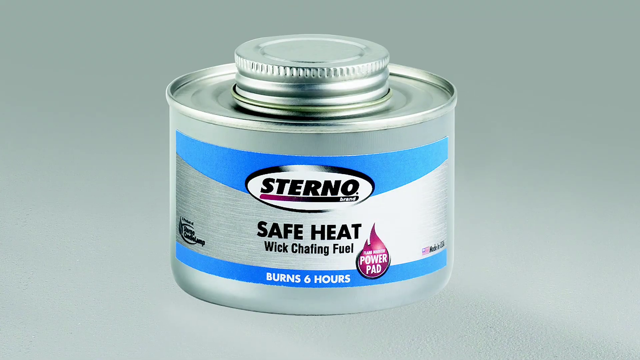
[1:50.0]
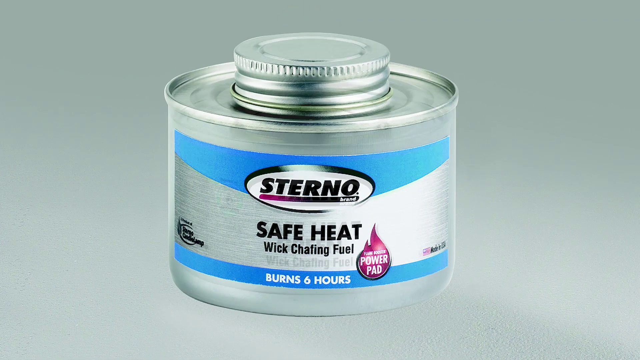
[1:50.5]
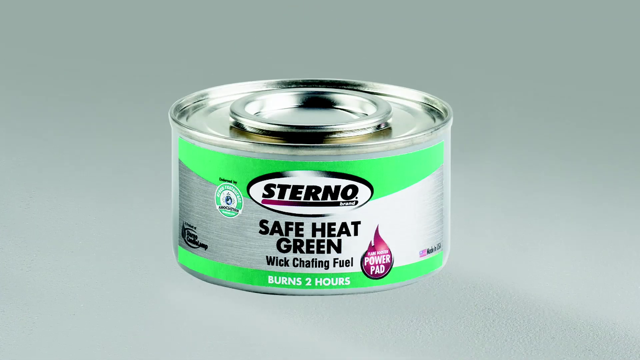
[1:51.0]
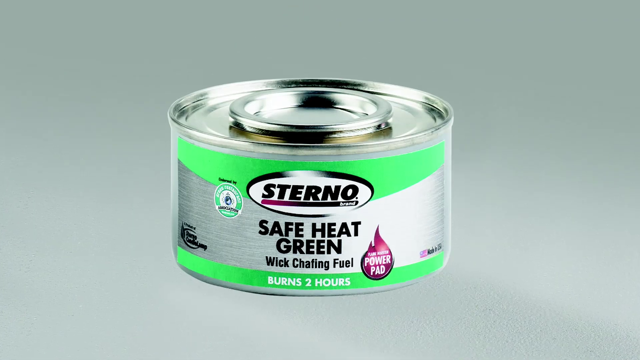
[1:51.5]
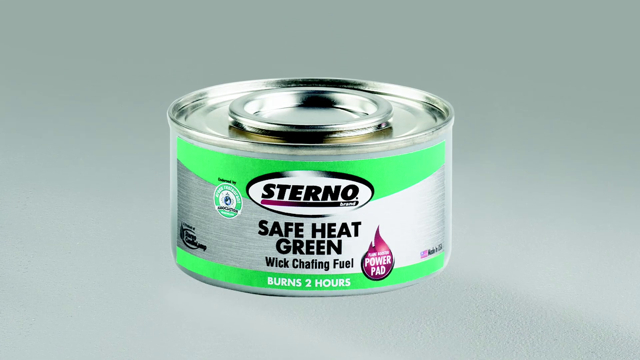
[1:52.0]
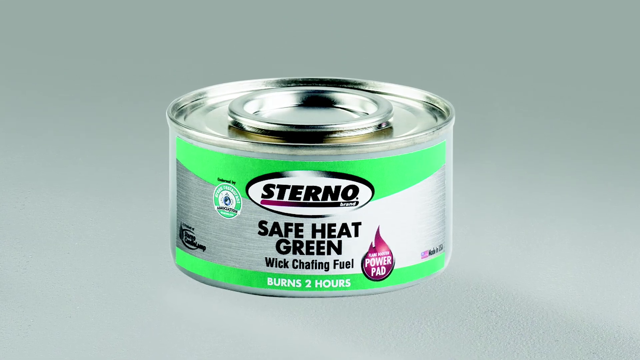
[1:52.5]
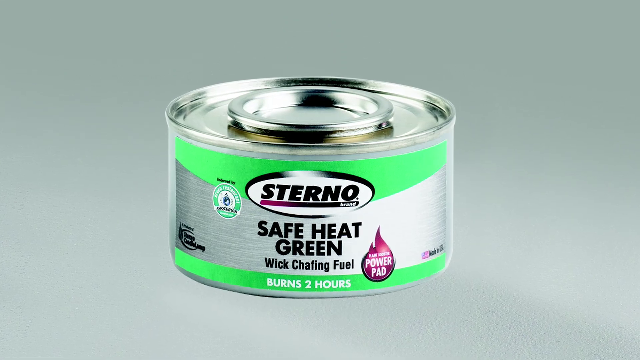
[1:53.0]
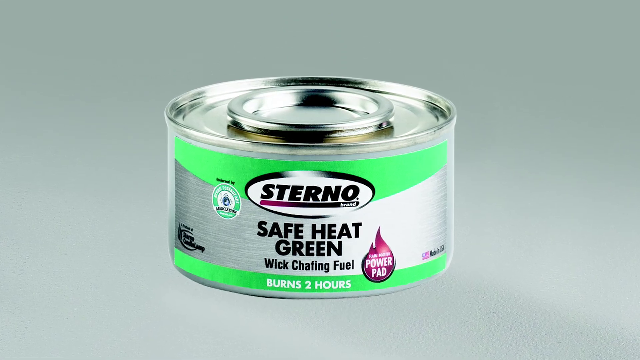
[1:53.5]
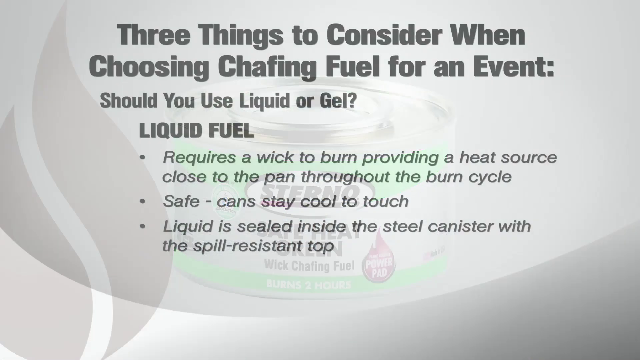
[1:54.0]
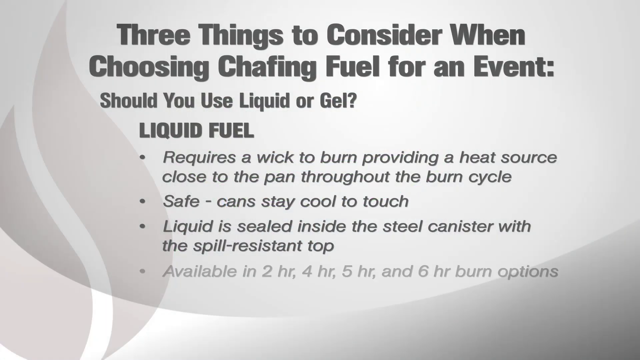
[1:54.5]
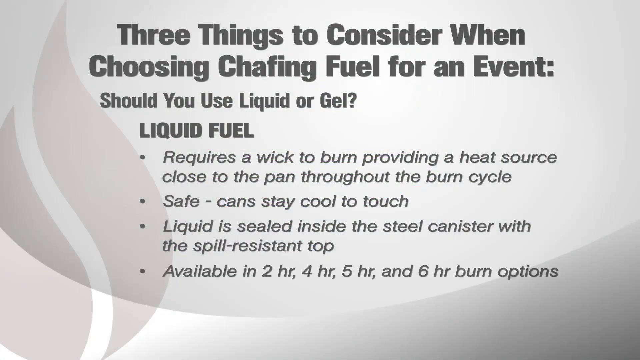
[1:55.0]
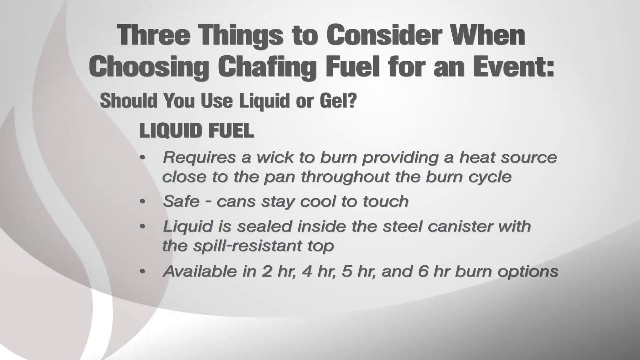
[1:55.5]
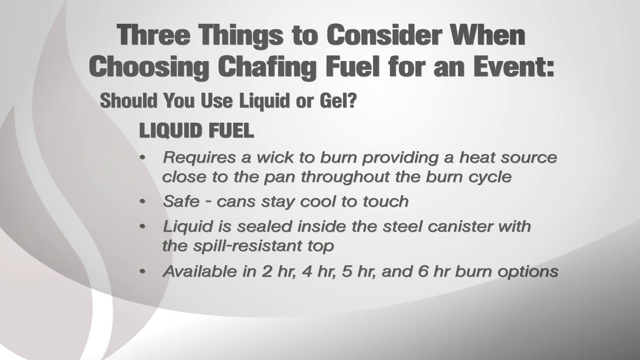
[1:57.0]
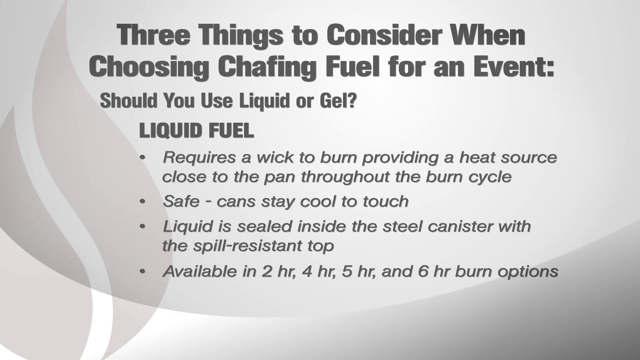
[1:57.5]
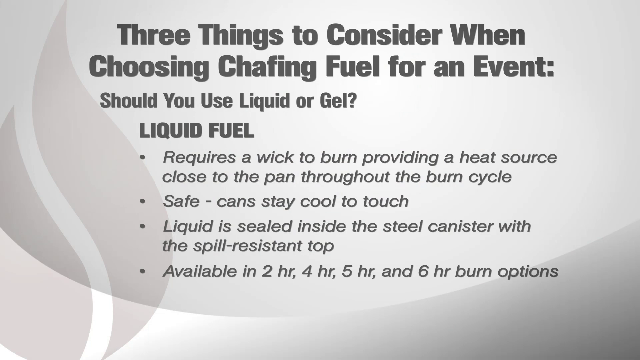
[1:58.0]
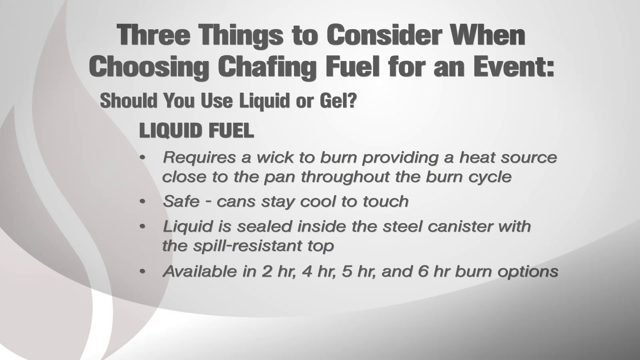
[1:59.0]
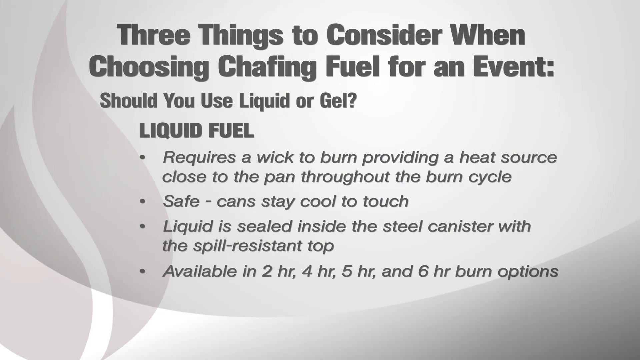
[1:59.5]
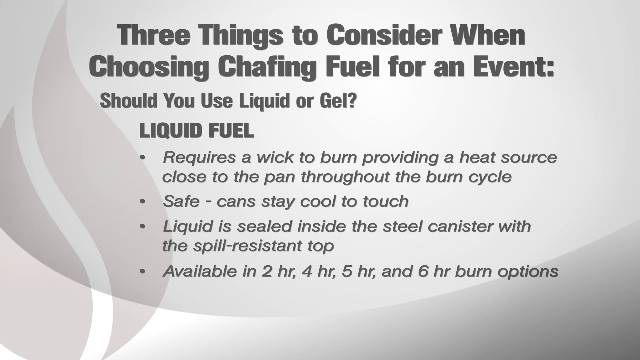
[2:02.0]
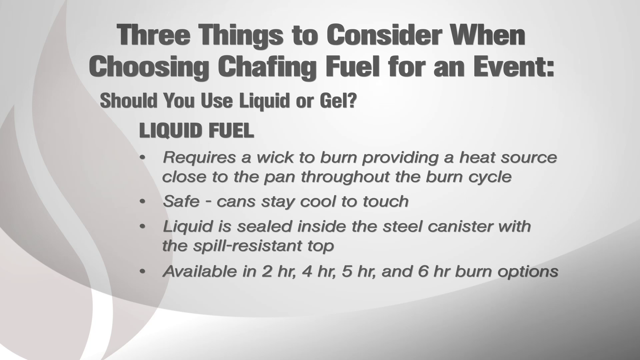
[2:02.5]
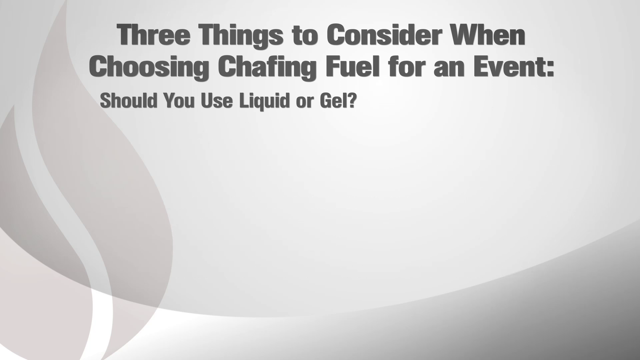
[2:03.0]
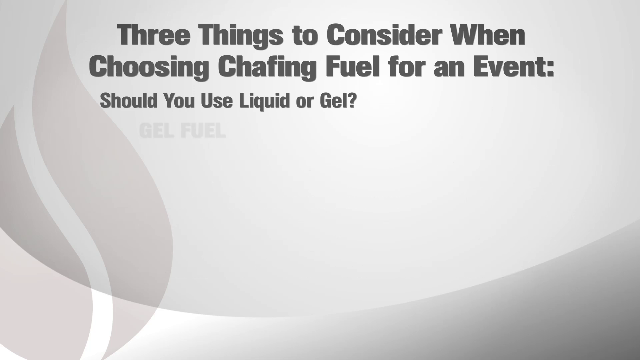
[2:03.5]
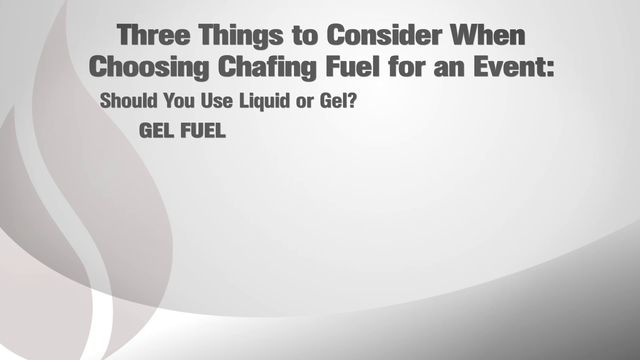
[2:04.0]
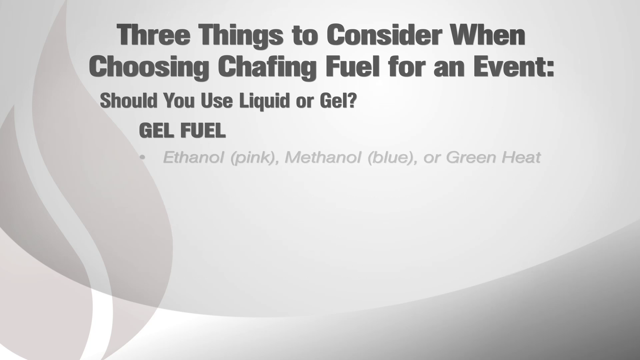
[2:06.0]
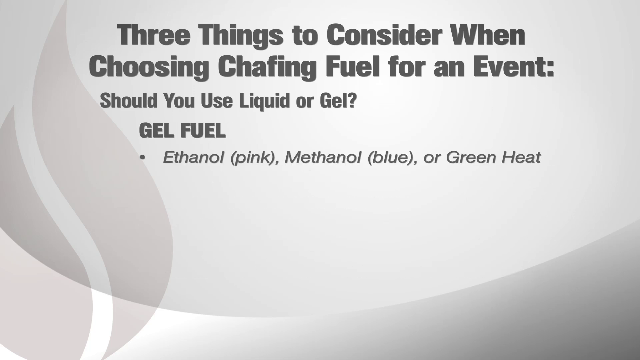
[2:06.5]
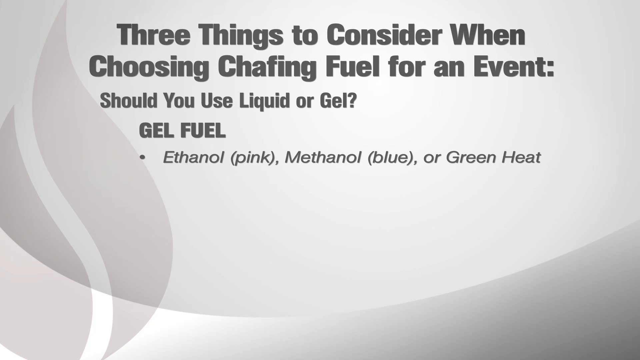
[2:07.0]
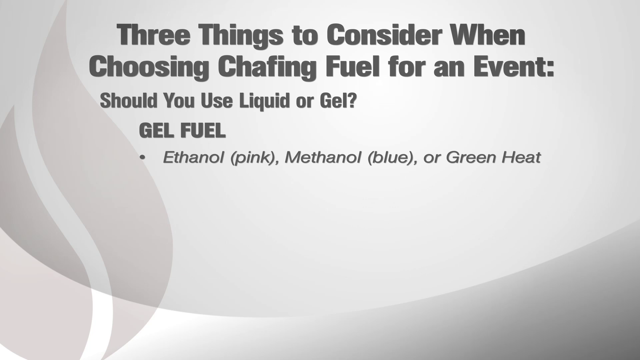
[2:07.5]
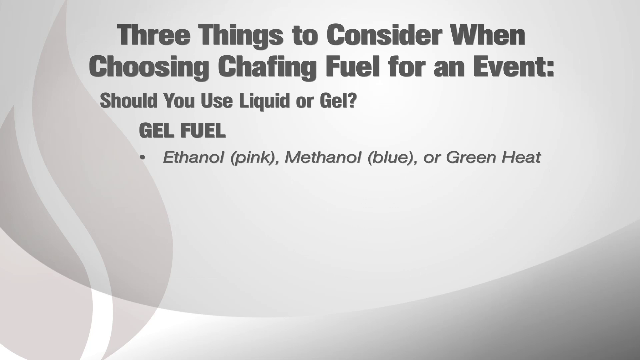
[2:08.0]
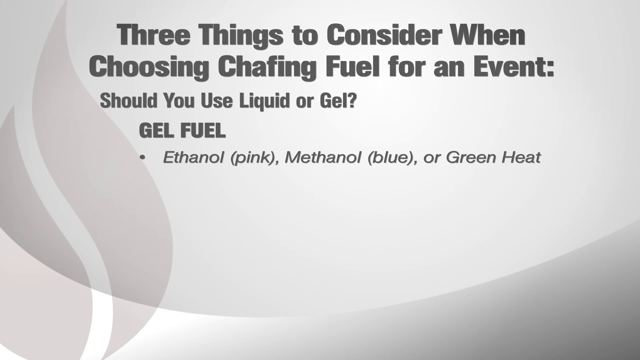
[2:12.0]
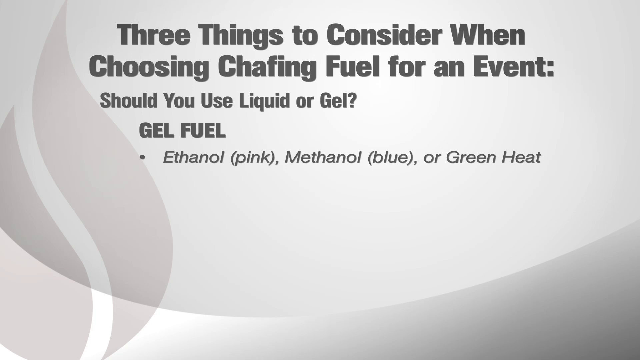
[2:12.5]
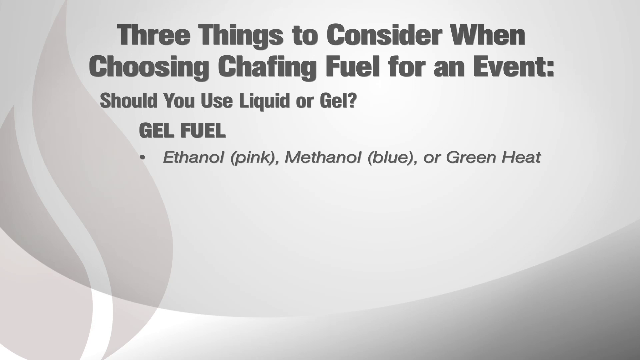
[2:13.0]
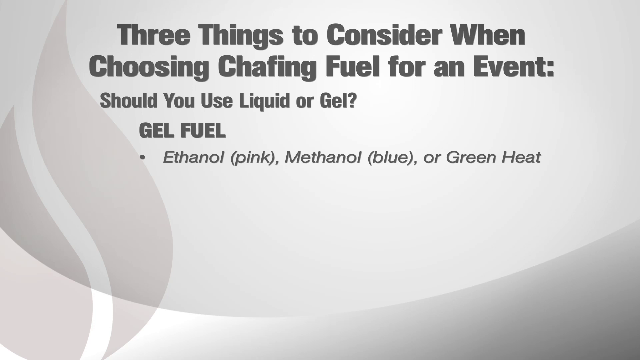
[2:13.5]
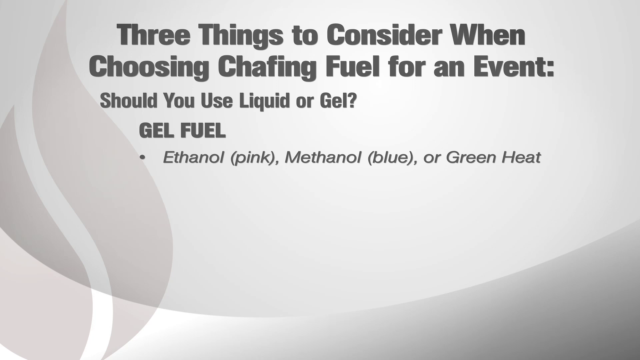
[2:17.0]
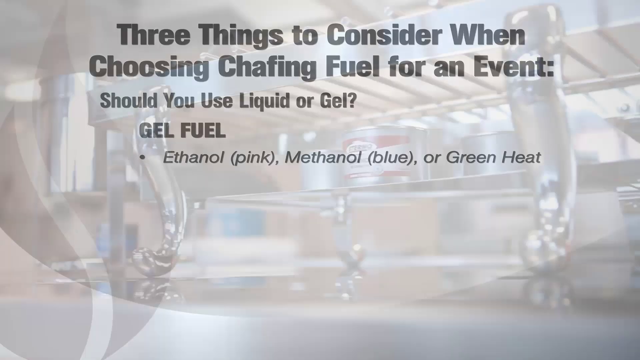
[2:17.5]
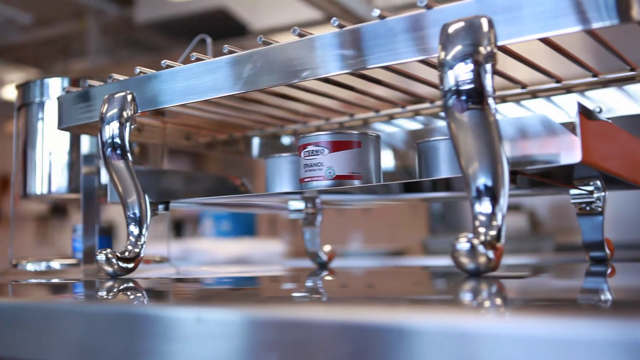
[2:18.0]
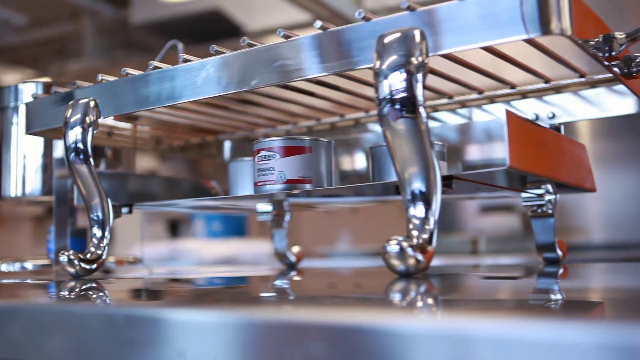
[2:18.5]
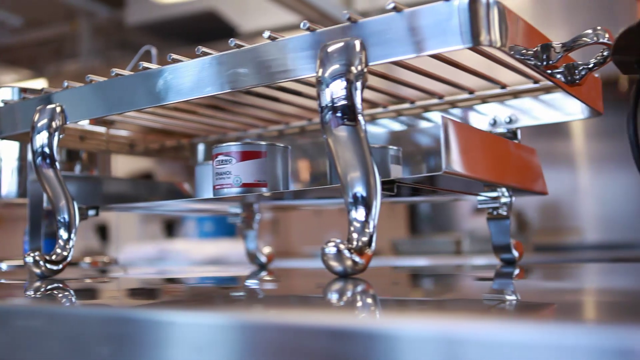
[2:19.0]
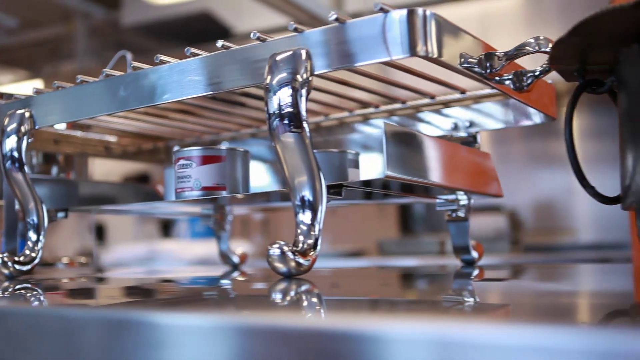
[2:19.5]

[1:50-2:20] A can of Sterno with an aluminum cap on top is in the center of the screen, labeled "Sterno, safe heat, wick, chafing fuel, burn six hours." A new can replaces it: an aluminum can with lime-green stripes at the top and bottom and an aluminum cap, labeled "Sterno safe heat green wick chafing fuel burns two hours." A text box then appears reading "three things to consider when choosing chafing fuel for an event. Should you use liquid or gel? Liquid fuel requires a wick to burn providing a heat source close to the pan throughout the burn cycle." The second bullet point reads "safe, can stay cool to touch", the third "liquid is sealed inside the steel canister with the spill resistant cap", and the next "available in two-hour, four-hour, five-hour, and six-hour burn options. For more information, visit www.fema.gov". A new text screen follows, beginning at the top with "three things to consider when choosing chafing fuel for an event. Should you use liquid or gel", then "gel fuel" with a bullet point reading "ethanol (pink), methanol (blue), or green heat." The scene then changes to a chafing pan that extends from the top of the frame to the bottom, with the camera angle showing the bottom of the chafing pan and a Sterno can underneath it.